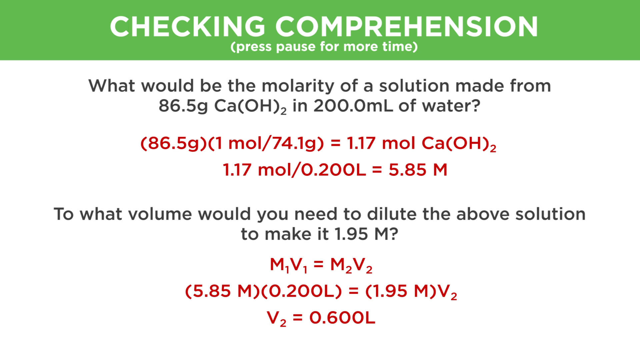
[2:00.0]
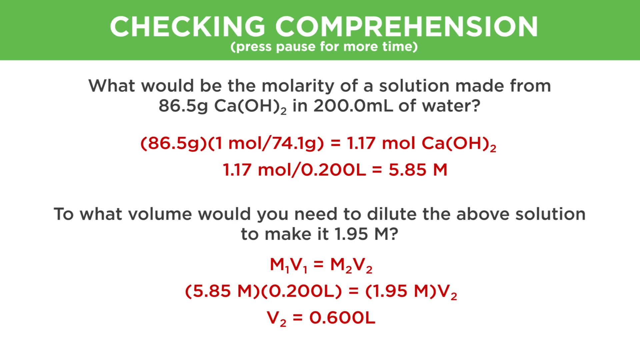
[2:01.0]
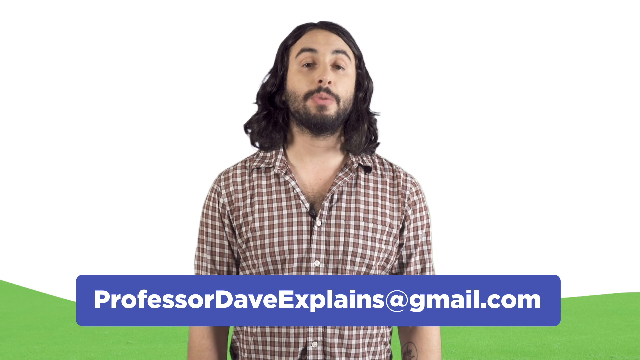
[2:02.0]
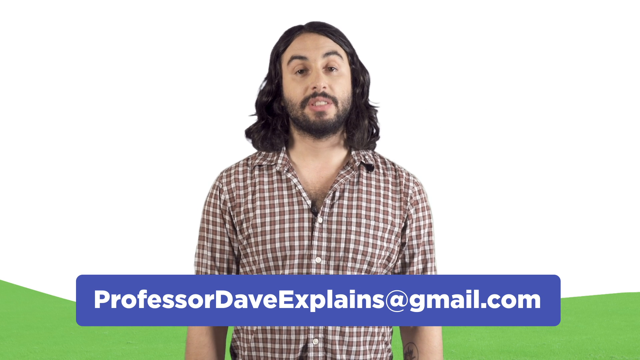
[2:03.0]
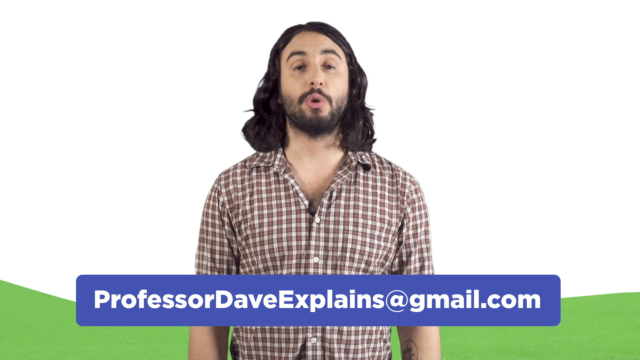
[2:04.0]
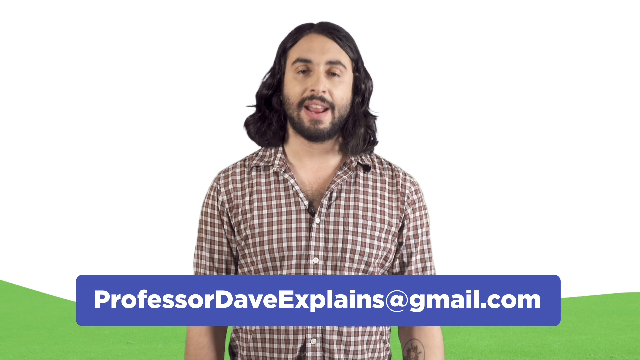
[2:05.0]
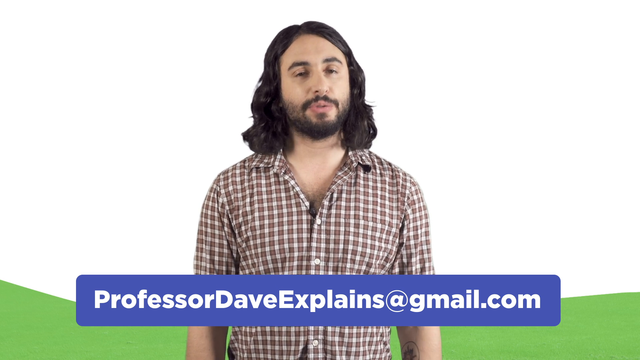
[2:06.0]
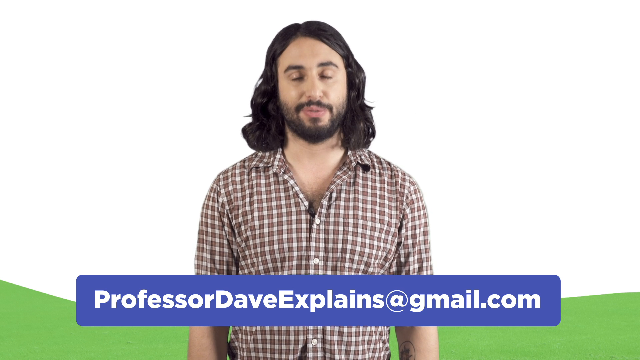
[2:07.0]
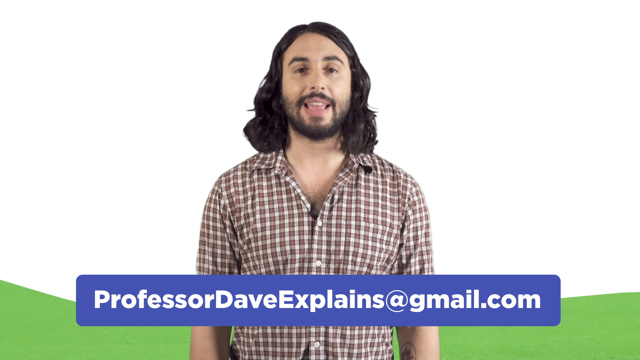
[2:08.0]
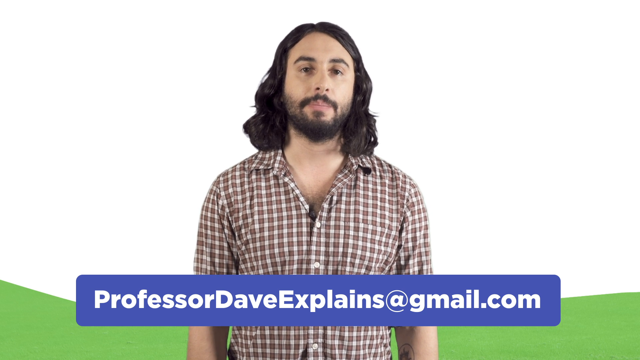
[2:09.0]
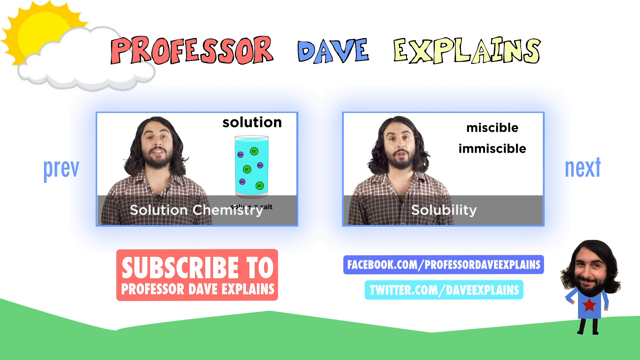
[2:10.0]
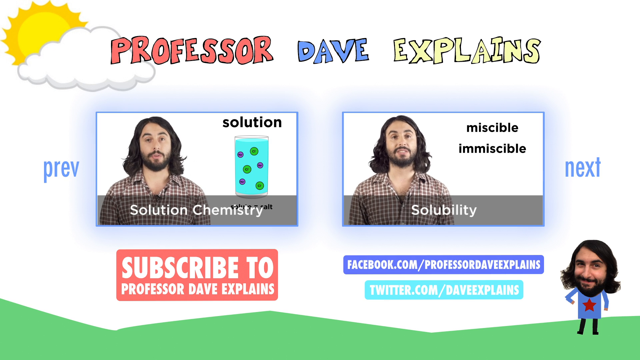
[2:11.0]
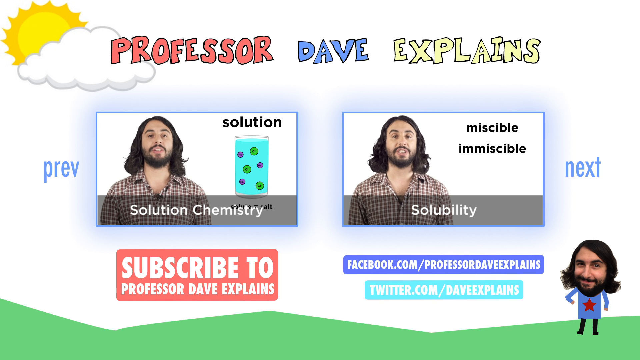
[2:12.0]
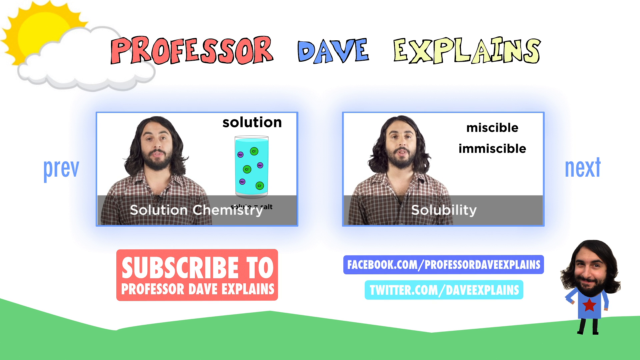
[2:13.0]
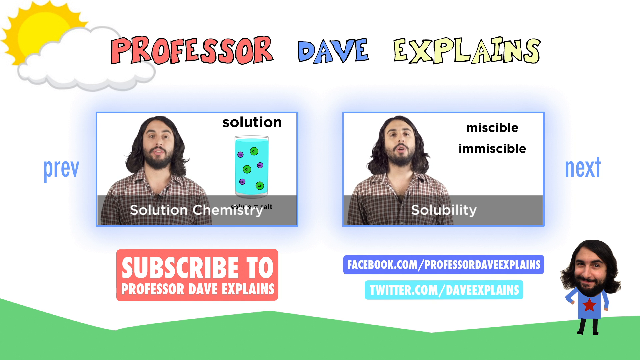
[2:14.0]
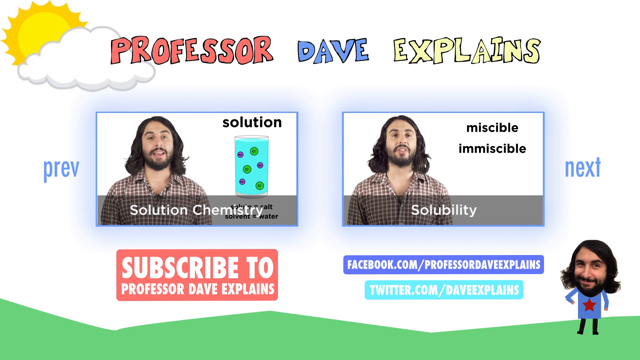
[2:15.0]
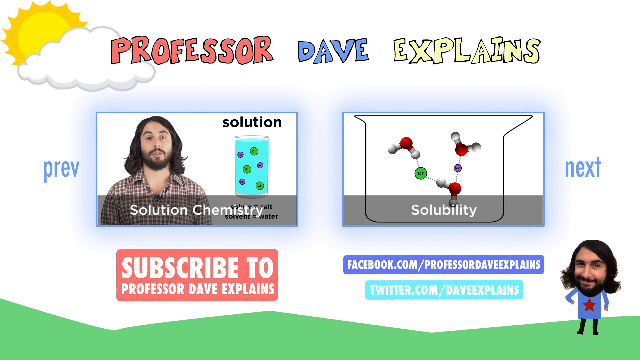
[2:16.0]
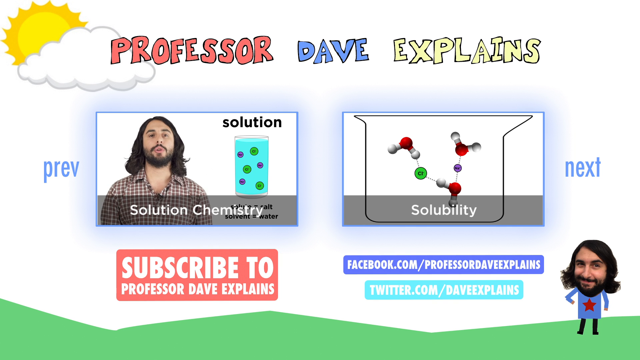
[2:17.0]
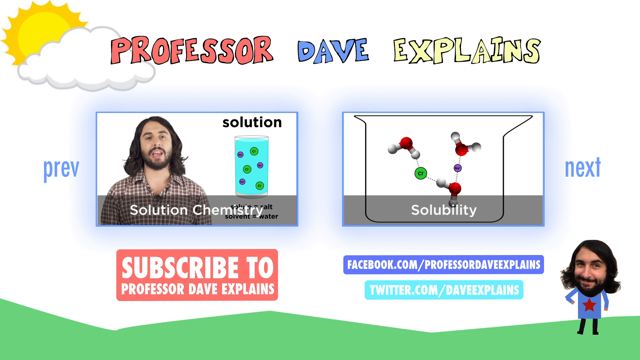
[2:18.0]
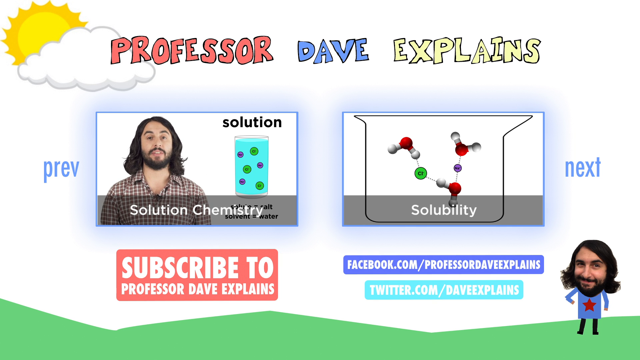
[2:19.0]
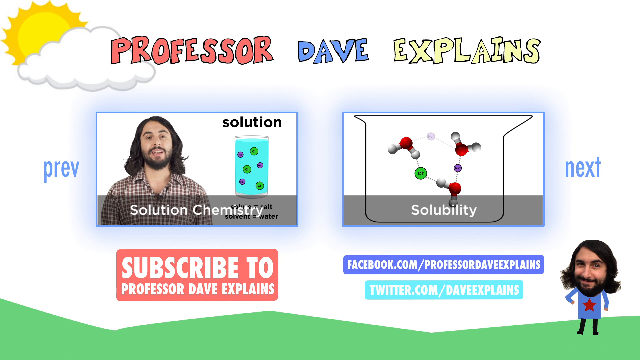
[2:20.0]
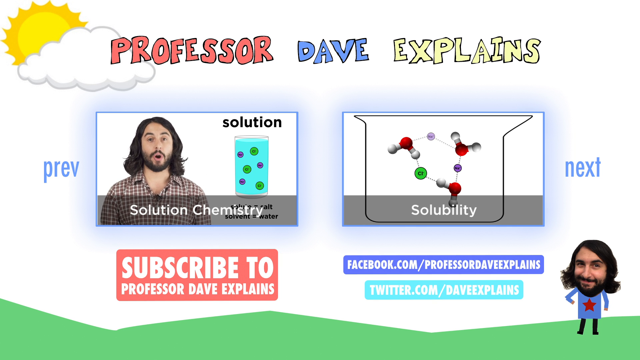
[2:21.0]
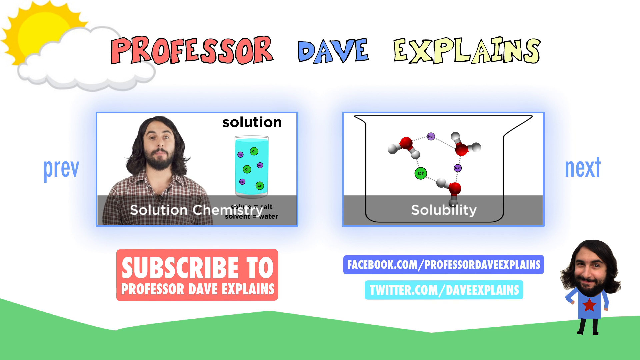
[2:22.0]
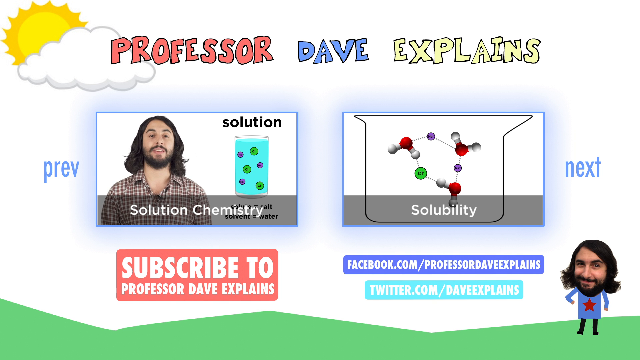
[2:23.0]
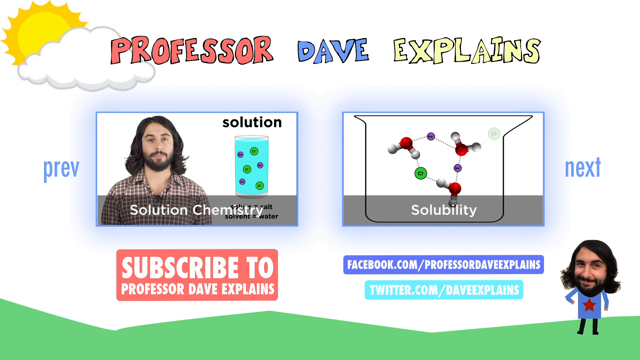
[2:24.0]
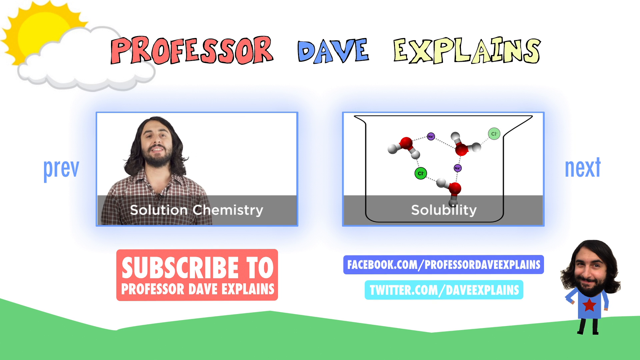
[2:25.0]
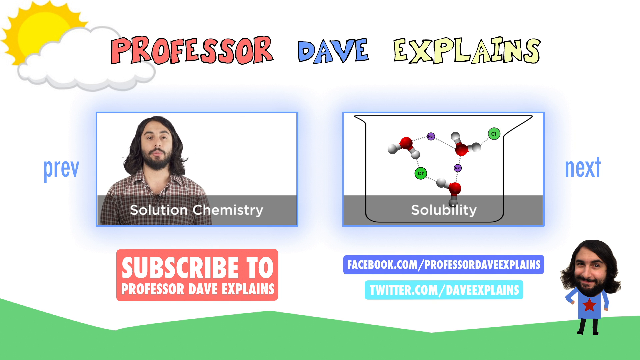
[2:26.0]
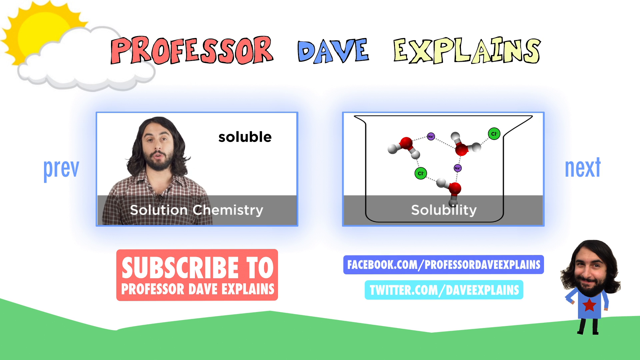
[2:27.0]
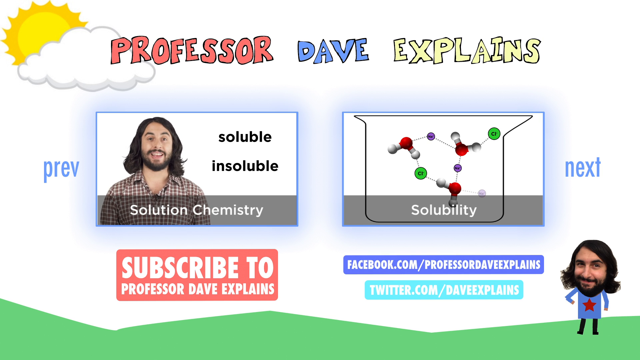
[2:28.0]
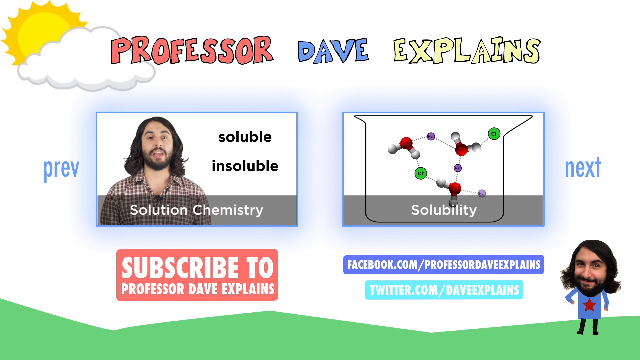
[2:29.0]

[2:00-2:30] A slide has a white background with a green border at the top containing the words "checking comprehension", and underneath, in parentheses, "press pause for more time". Below is a question in black: "what would be the molarity of a solution made from 86.5g Ca(OH)2 in 200.0 ml of water". Underneath is an answer in red: "(86.5g)(1 mole/74.1g) = 1.17 mol Ca(OH)2", with another equation below it, "1.17 mol/0.200l = 5.85m". Under this, in black, is the sentence "to what volume would you need to dilute the above solution to make it 1.95m". Below it in red are the equations "M1V1 = M2V2", then "(5.85m)(0.200l) = (1.95m)V2", and at the bottom of the screen "V2 = 0.600l". The video then transitions to a man who appears to be in his 30s, with long black hair down to his neck and a black beard, wearing a plaid red and white shirt. He is standing in the middle of the screen, seen from the stomach up, with his arms by his side. At the bottom of the screen is a blue rectangle that states in white the email address "Professor Dave explains at gmail.com", and a green border is in the background on the left and right sides of the blue box. The man talks, slightly shaking his head and looking at the camera. The next screen has a white background with the word "Professor" in red, "Dave" in blue, and "explains" in yellow at the top. To the left is a drawing of the sun, with a cloud to its lower right. Beneath "Professor Dave explains" are two small rectangular boxes with videos playing, each showing the man in the plaid shirt talking on its left side. The left video has a gray border at the bottom with the words "solution chemistry" in white; the right video has a gray rectangle at the bottom with the word "solubility". Beneath the left video is a red rectangular box with "subscribe to Professor Dave explains" in white. On the right side are two thinner rectangular boxes: the top one, in blue, has the web address "facebook.com/Professor Dave explains", and below it a brighter aqua blue box has "twitter.com/Dave explains". To the right of these is a picture of the man with the plaid shirt on a cartoon body wearing a long black shirt with a red five-pointed star and short black pants. The word "PRV" appears to the left and right of the videos, and the word "next" by the video on the right. The right video changes to a picture of a beaker with what looks like red DNA molecules. The left video shows a glass with blue liquid containing three purple circles and three larger green circles, with the word "solution" over the glass. The man continues to talk in the left video, and the words "soluble" and "insoluble" appear on the right side of this video.